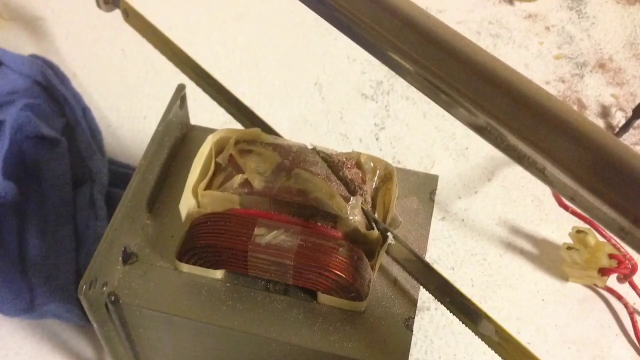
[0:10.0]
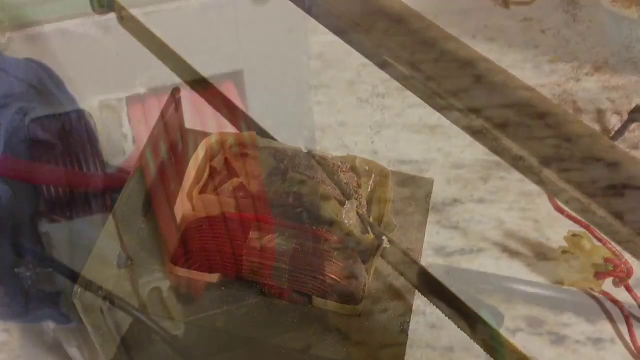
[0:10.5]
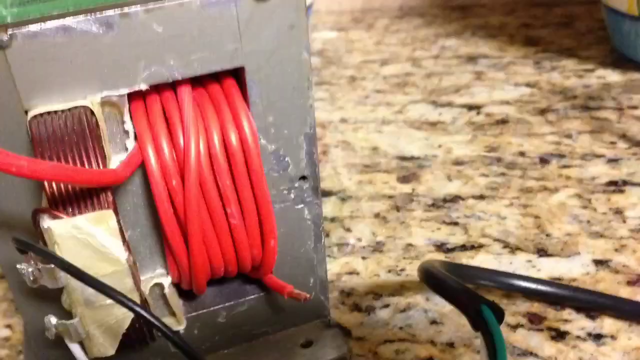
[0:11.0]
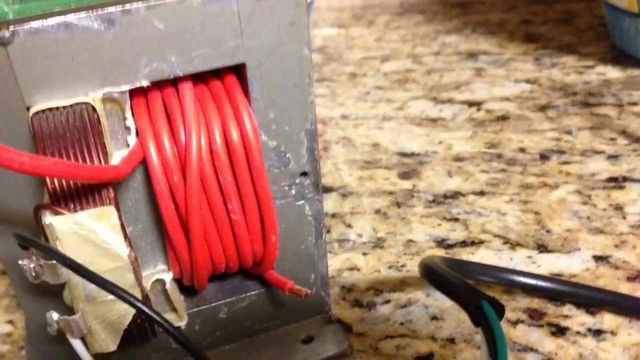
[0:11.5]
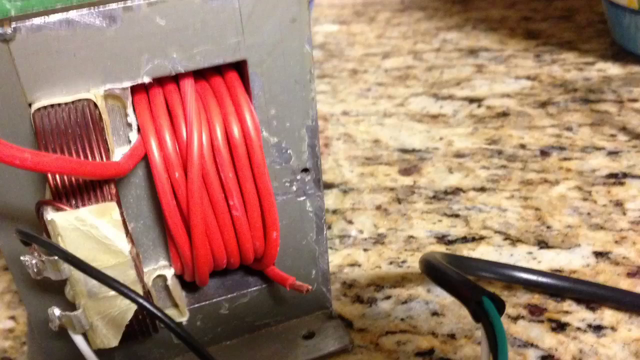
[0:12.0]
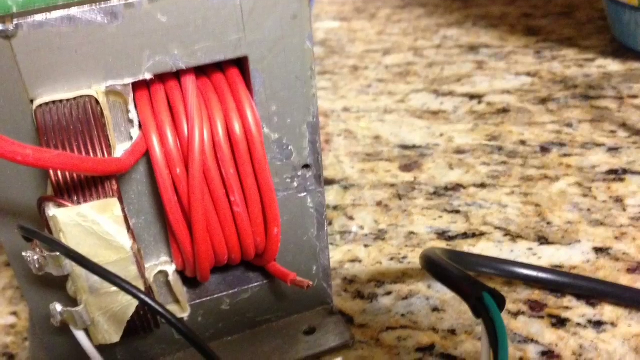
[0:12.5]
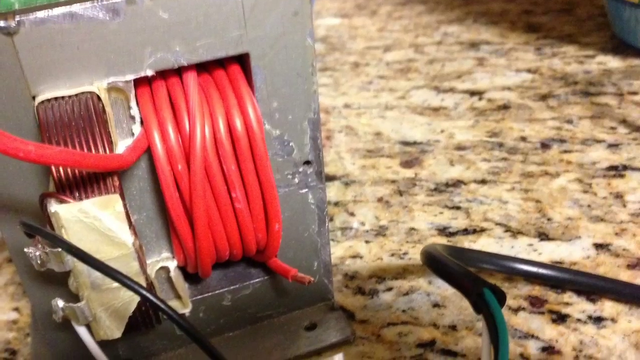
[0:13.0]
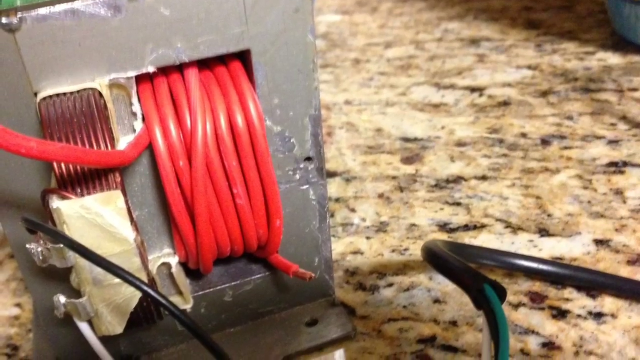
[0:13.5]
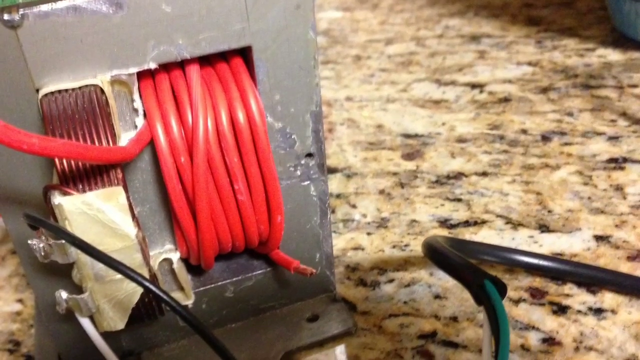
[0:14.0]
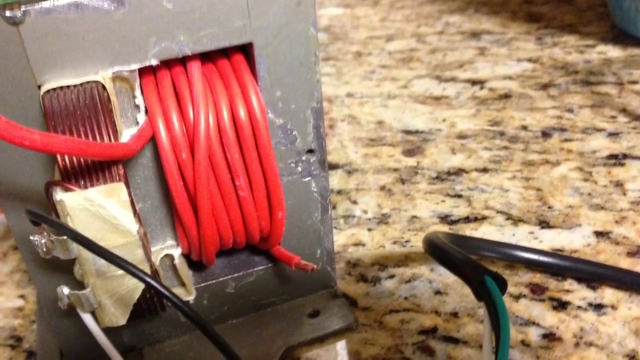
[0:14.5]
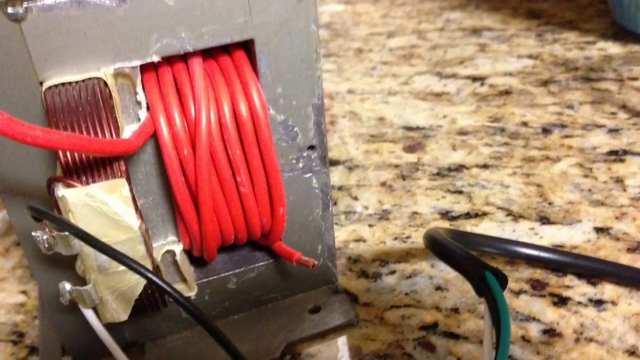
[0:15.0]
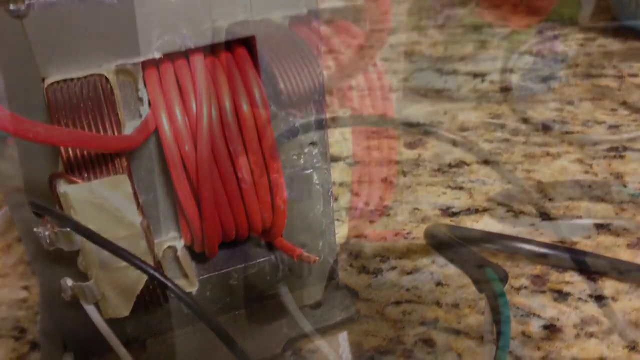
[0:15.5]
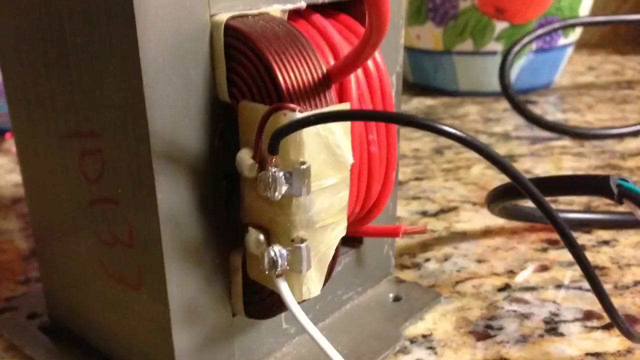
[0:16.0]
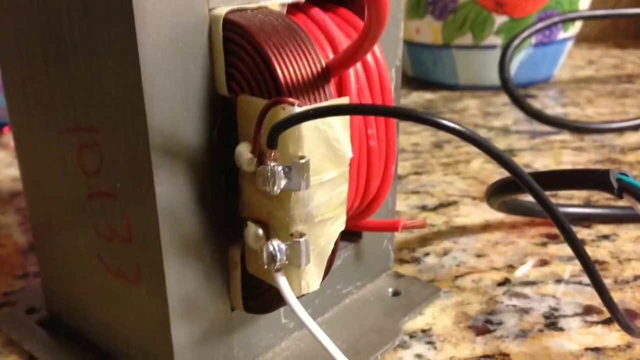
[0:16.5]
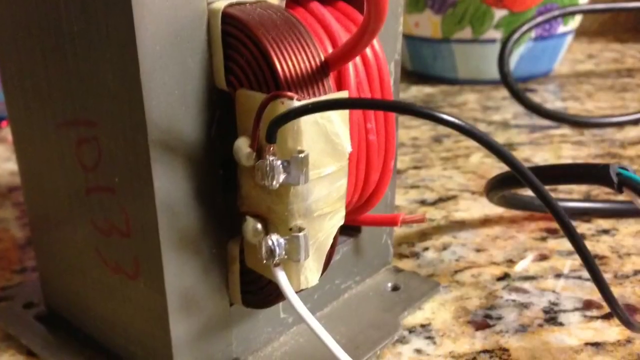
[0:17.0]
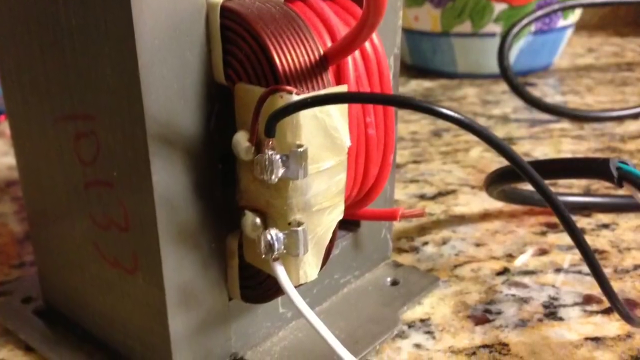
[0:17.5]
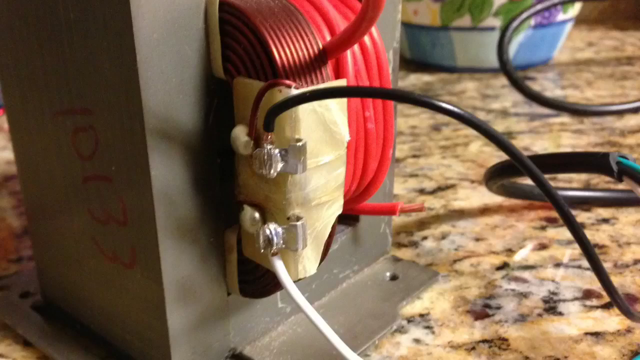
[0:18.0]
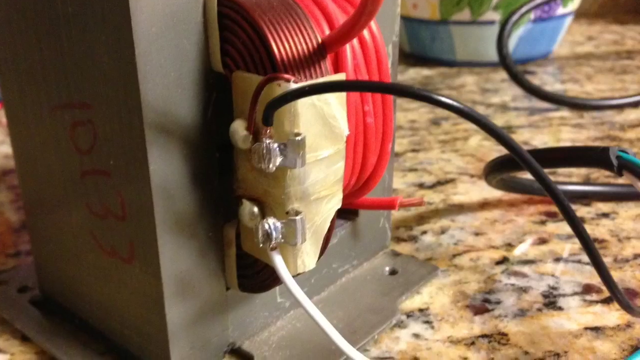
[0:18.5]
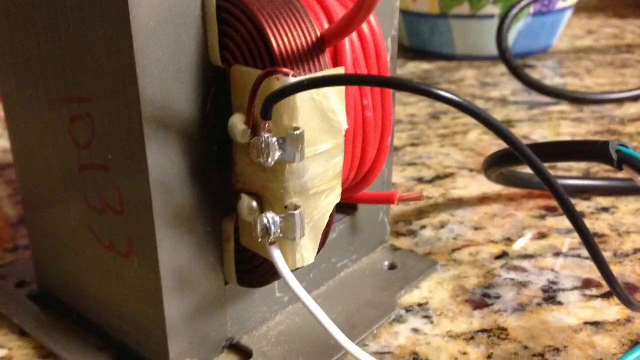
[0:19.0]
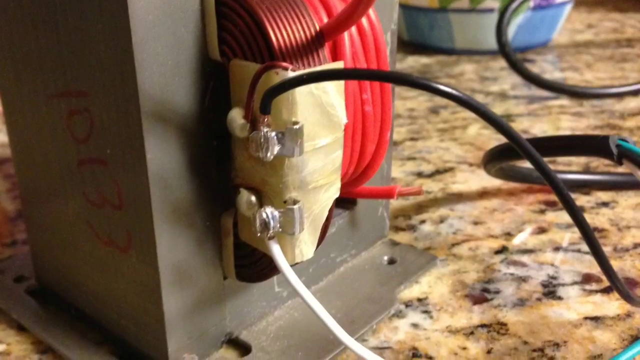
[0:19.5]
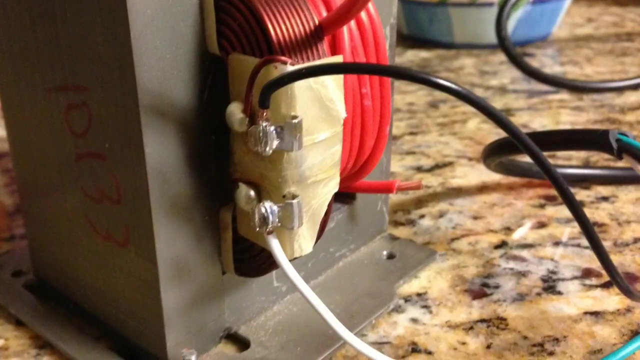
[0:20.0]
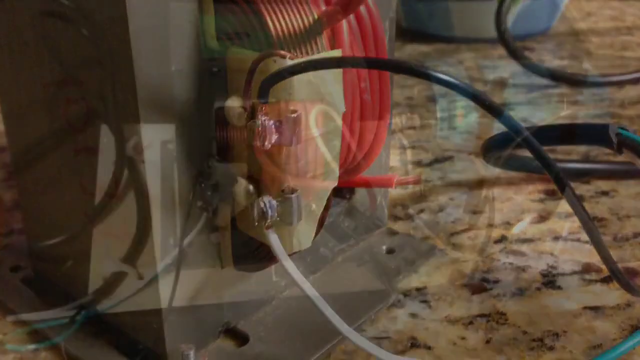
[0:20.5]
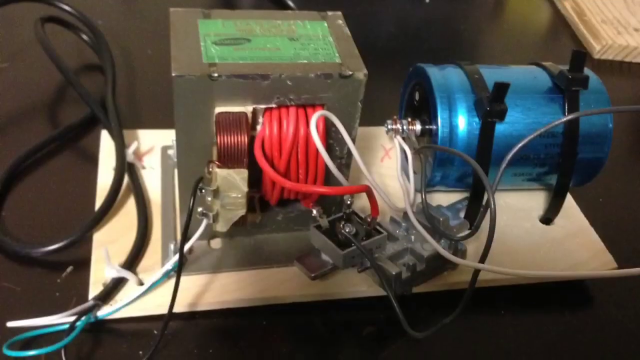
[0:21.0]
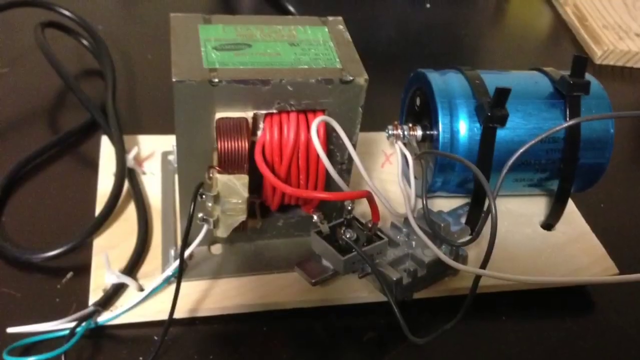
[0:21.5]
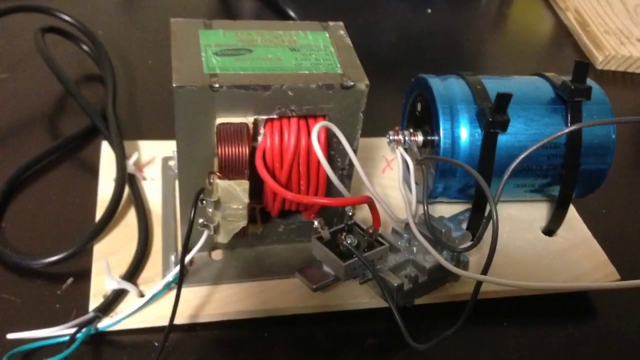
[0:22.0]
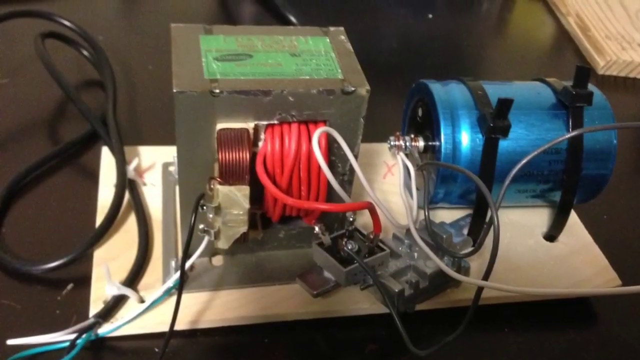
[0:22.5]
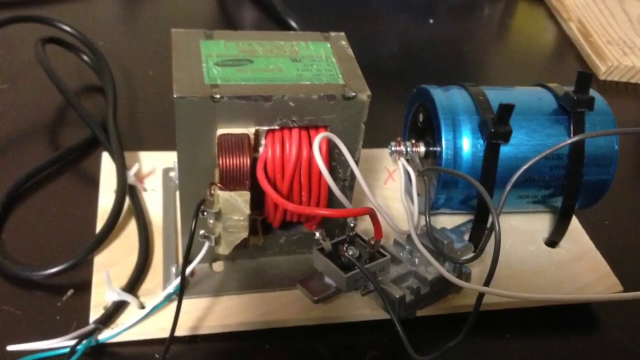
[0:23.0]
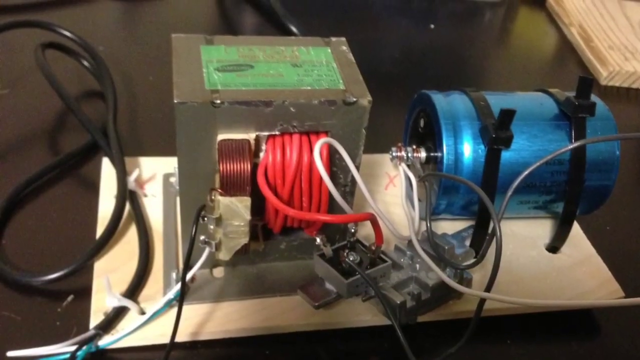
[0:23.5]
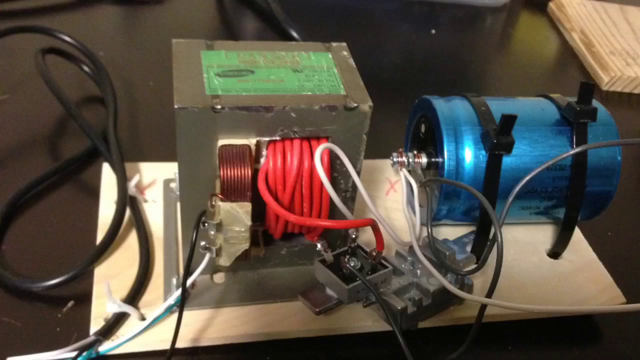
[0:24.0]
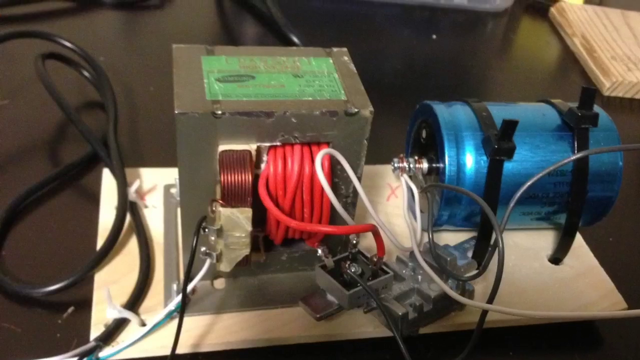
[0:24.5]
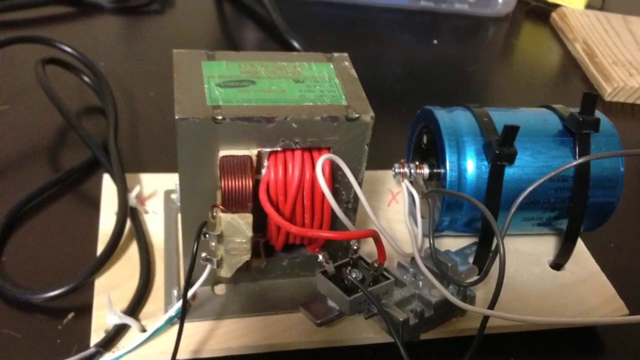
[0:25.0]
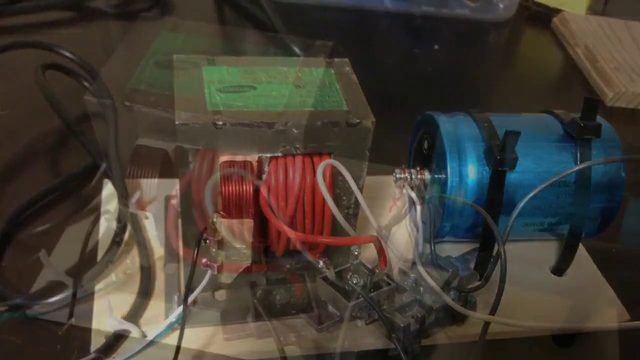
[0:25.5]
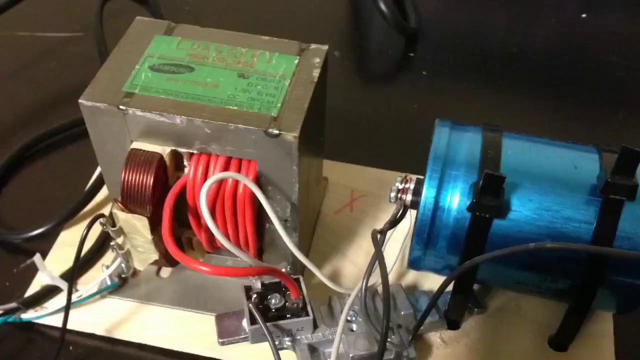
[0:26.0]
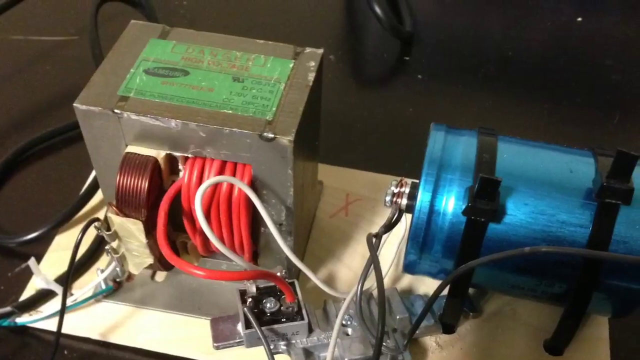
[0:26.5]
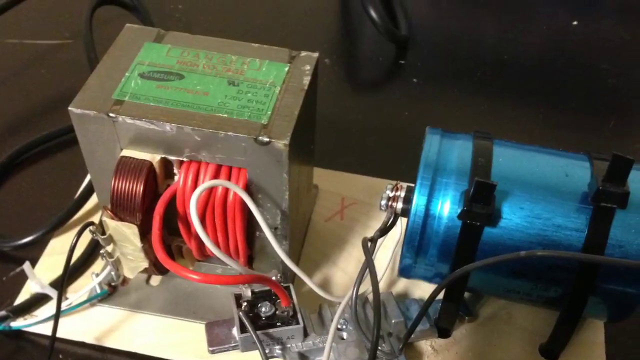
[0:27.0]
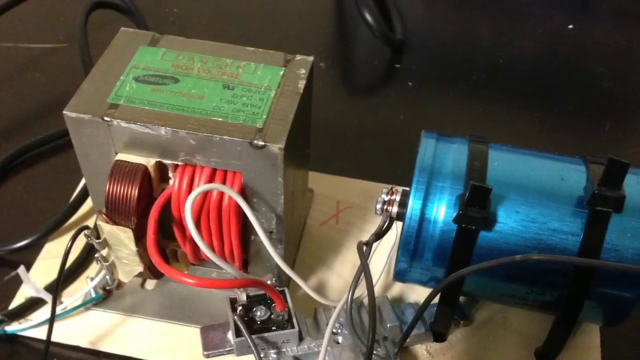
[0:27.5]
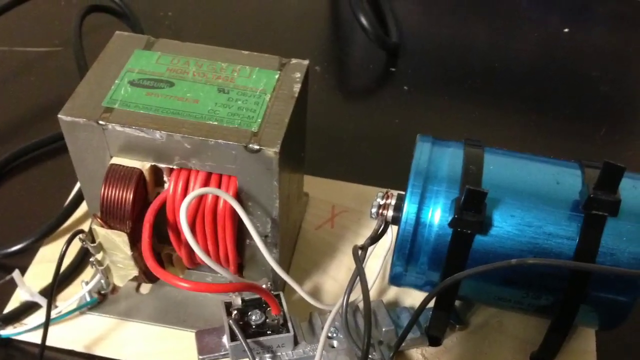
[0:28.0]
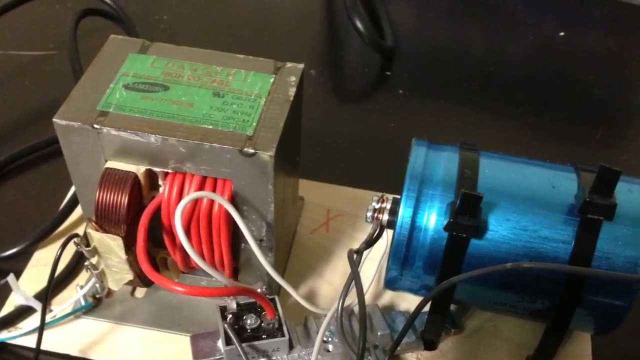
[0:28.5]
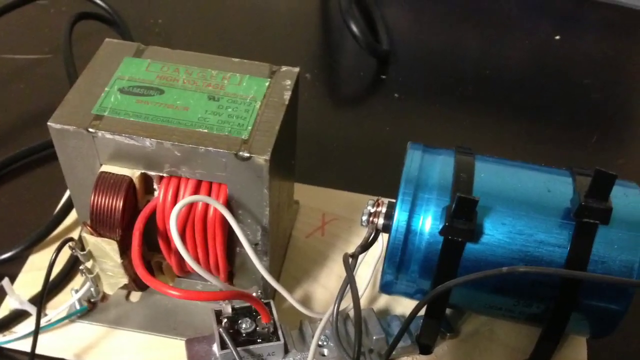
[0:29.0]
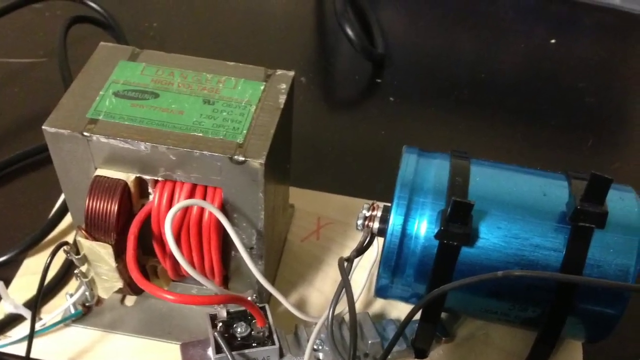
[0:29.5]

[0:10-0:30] The scene fades to a close-up of the wire block. On its left side is a spooled crimson wire with what looks like masking tape on its bottom half, separated by a piece of metal in the middle of the block; in a square hole in the middle of the metal block is a spooled, thicker red wire. The block is on what looks like a flecked marble countertop. In the bottom right-hand corner is a black wire, larger than the red one, in a rough arc shape, with some green wires and a black wire coming out of it. From a different angle, red writing on the side of the block, obscured in shadow, appears to read "10133". On the back of the apparent masking tape area a black wire is attached, seemingly clipped to it, and beneath it another white wire is attached, coming out the bottom in a similar way. In the background is the bottom of a floral pot with a blue striped pattern, grape leaves and grapes. The camera pans downward. In a new scene, the same wire block is shown with the red wire wired into a square receptacle. A blue metallic cylinder is zip-tied to a block that the wire block is sitting on, to its right. A metal peg comes out of the cylinder's left side, with a black wire on it first and then a white wire at the tip; the white wire is wired into the same square receptacle as the red wire from the block. To the left of everything is the thicker black wire, and in the upper right-hand corner is the edge of a wooden plank. The scene pans upward, revealing a green label on top of the wire block, and the camera pans diagonally across it.